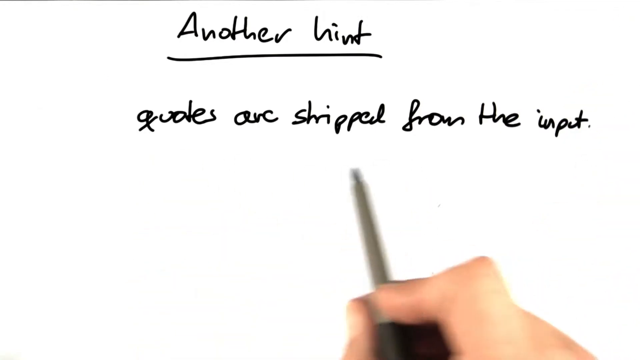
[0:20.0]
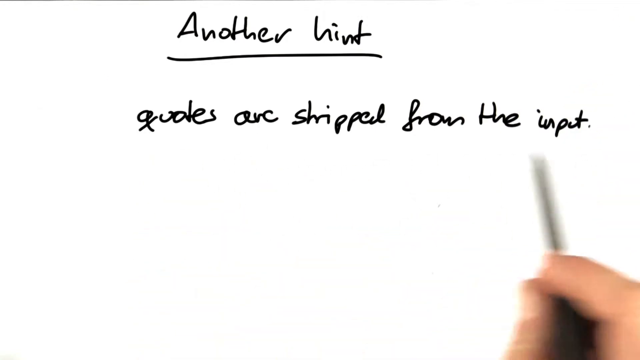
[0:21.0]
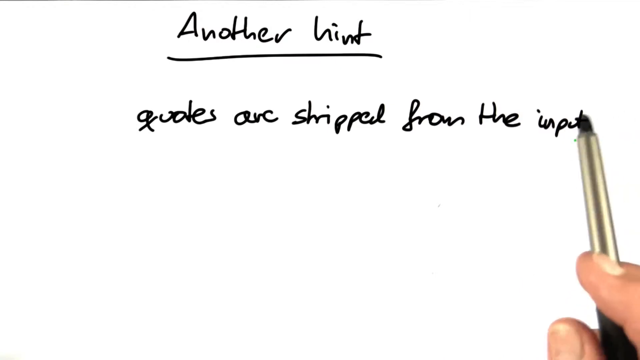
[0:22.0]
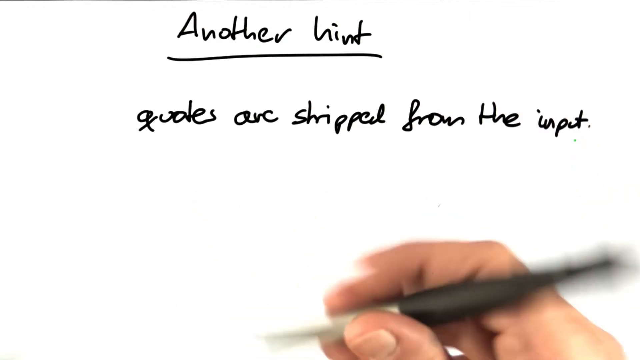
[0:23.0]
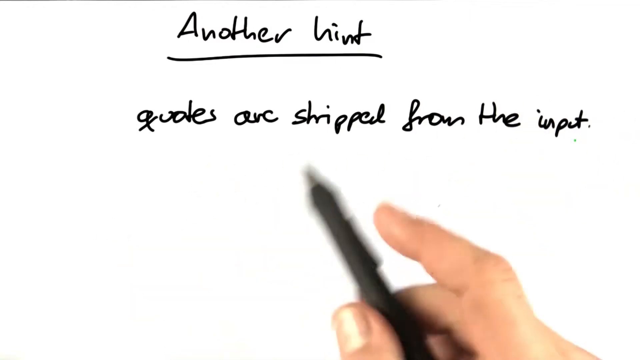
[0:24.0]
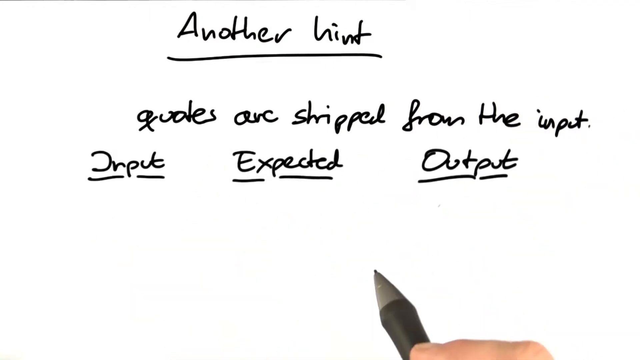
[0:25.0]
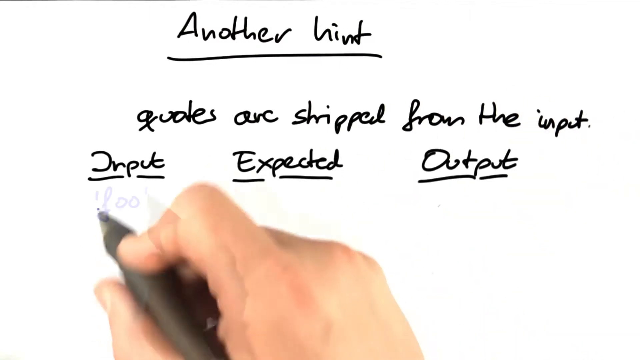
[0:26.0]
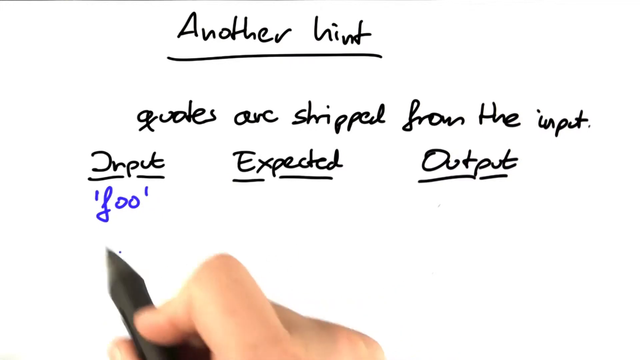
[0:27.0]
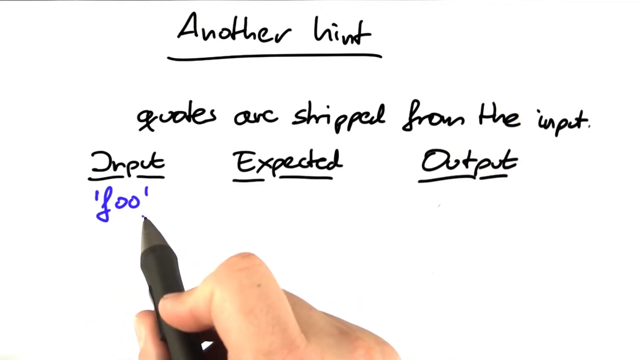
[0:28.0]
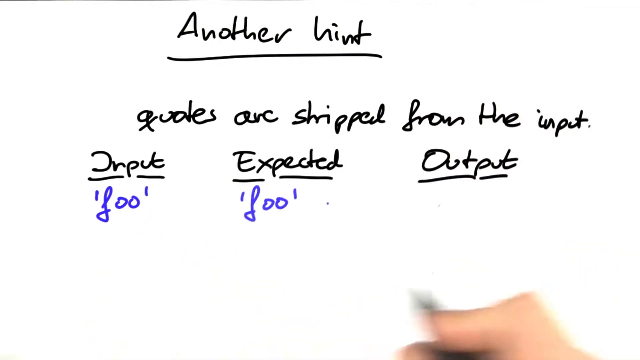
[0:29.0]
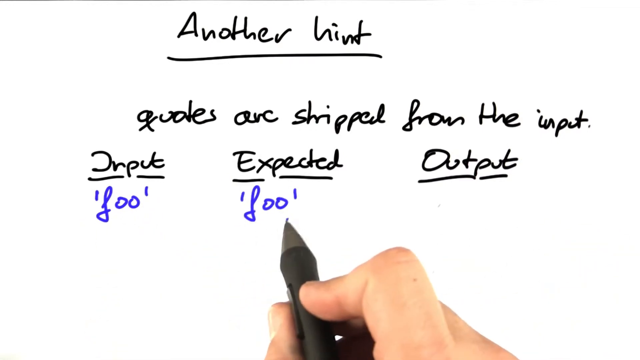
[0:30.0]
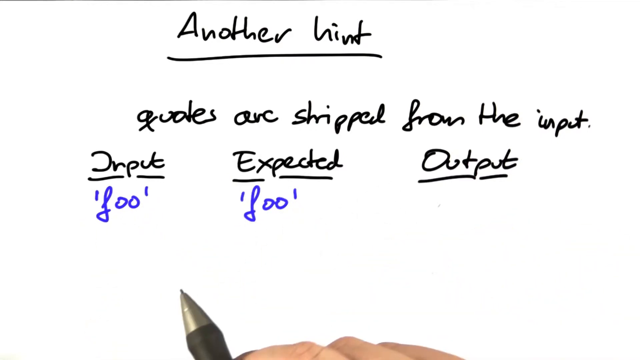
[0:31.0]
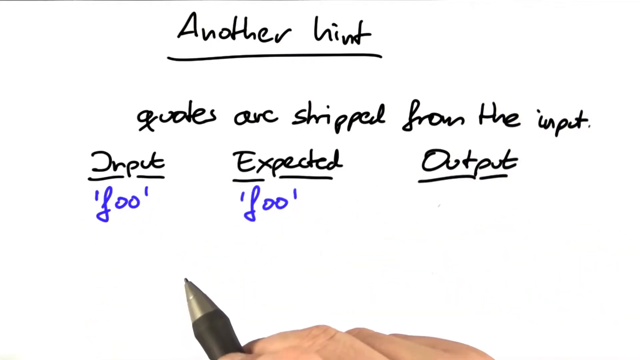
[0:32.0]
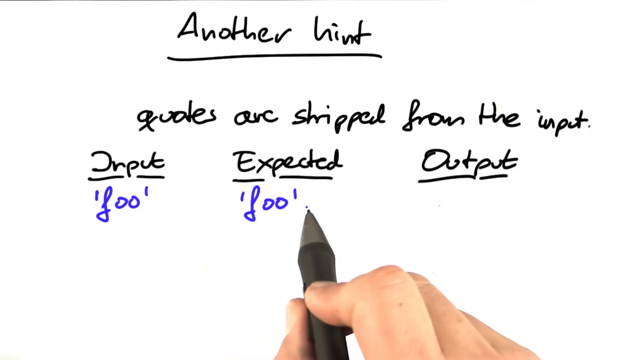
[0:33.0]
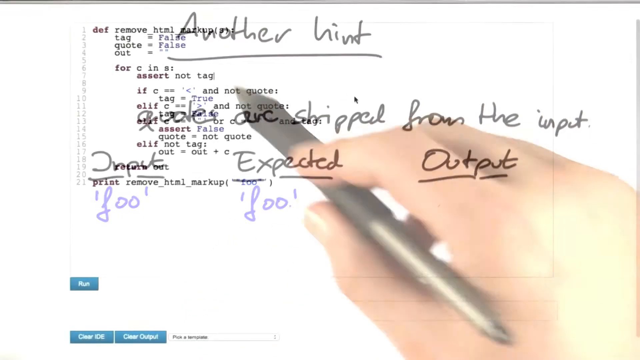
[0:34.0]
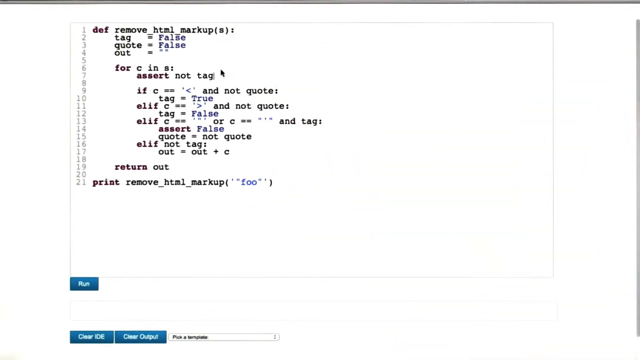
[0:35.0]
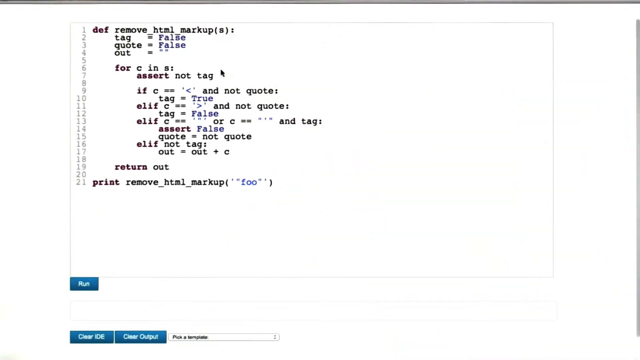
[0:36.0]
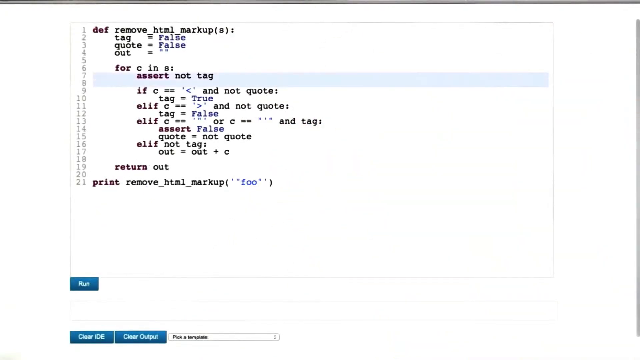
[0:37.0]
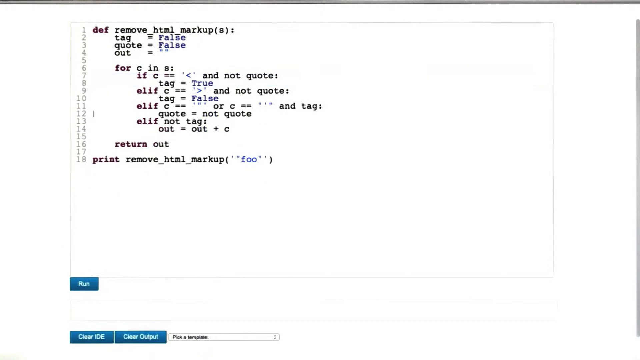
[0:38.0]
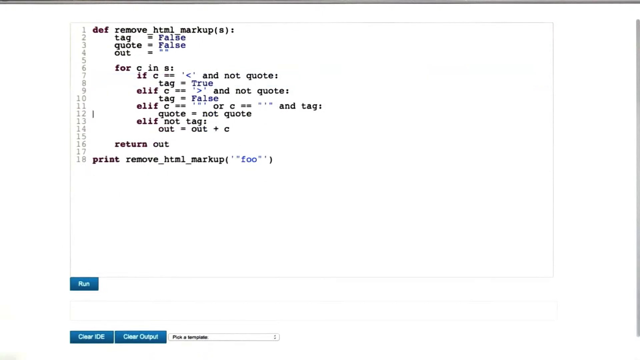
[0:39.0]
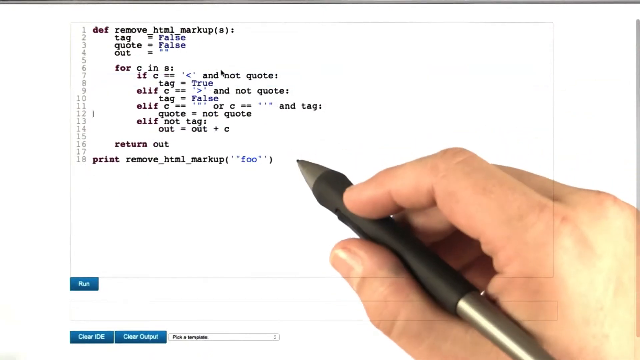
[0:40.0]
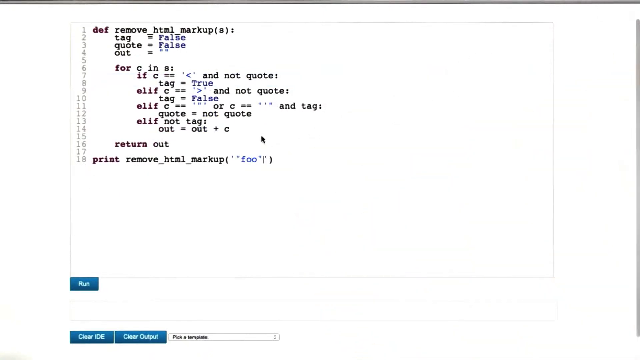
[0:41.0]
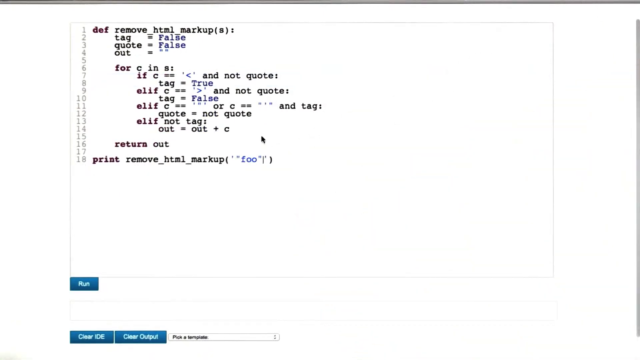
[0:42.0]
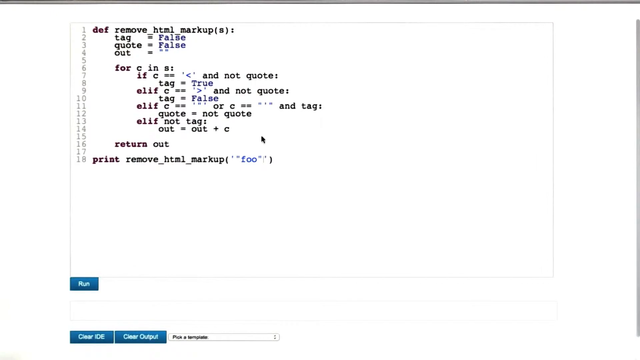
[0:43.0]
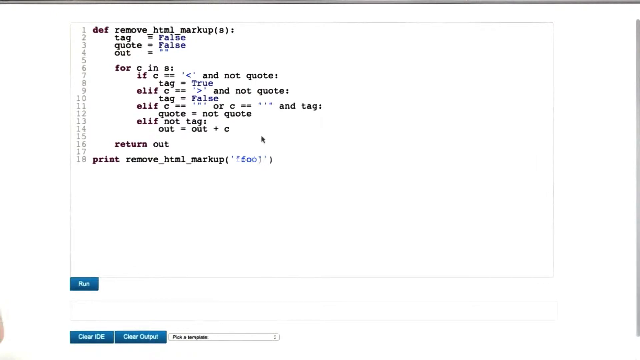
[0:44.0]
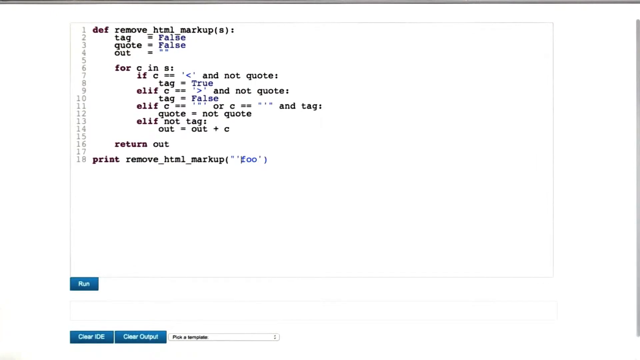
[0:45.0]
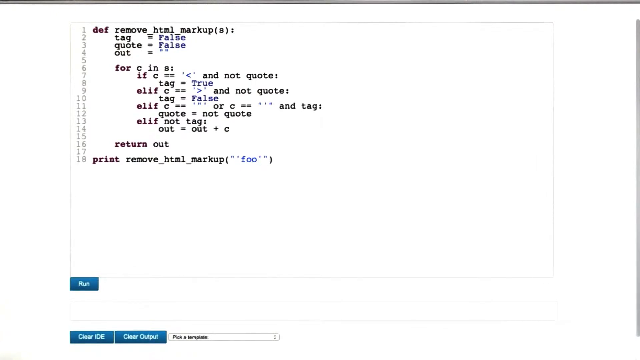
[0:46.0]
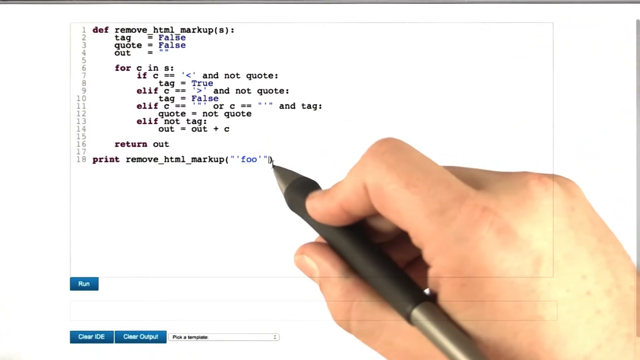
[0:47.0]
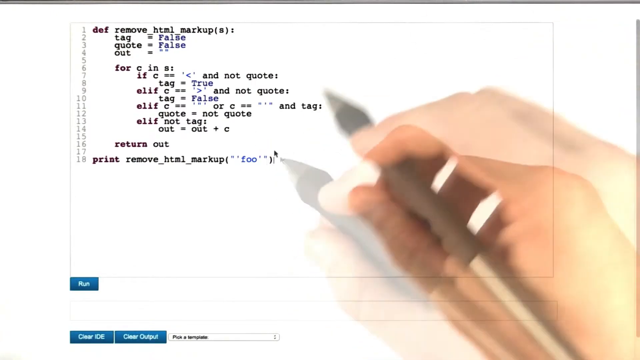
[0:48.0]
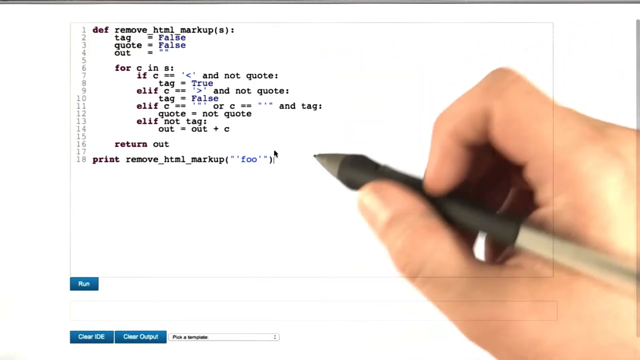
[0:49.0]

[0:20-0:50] The writing continues, laying out how a solution is reached. Another hint is written, about what is stripped from the input, followed by input and expected output. More information is added, some earlier items are removed, and the same thing that was written at the start is written again in a different way.